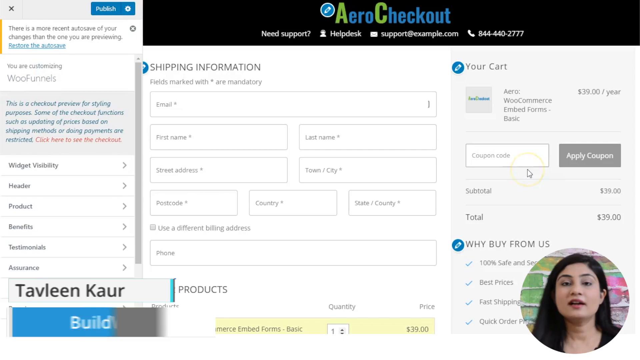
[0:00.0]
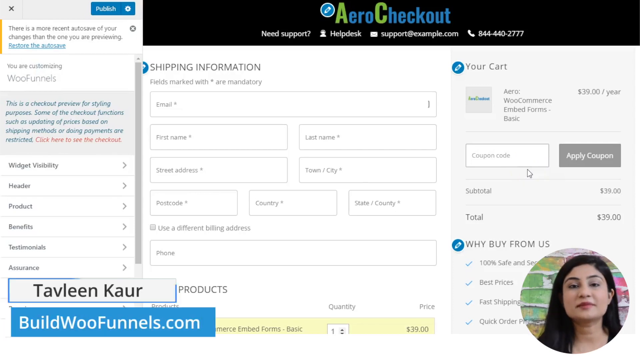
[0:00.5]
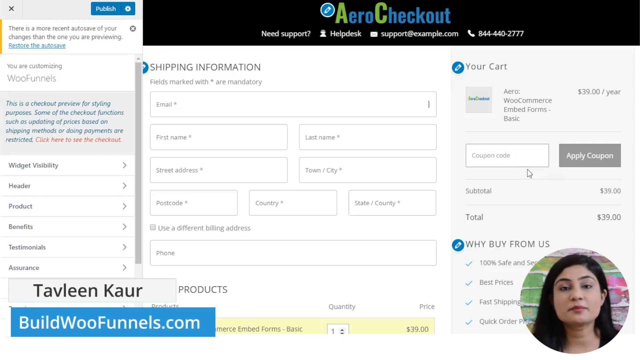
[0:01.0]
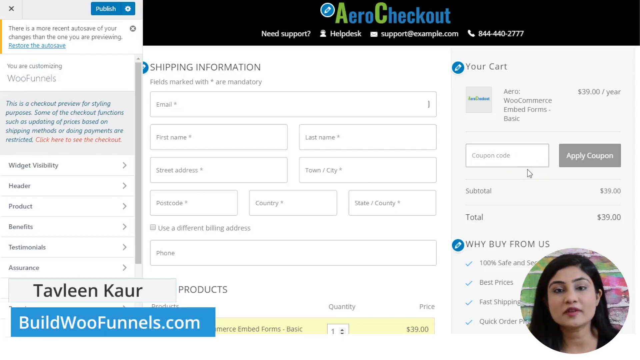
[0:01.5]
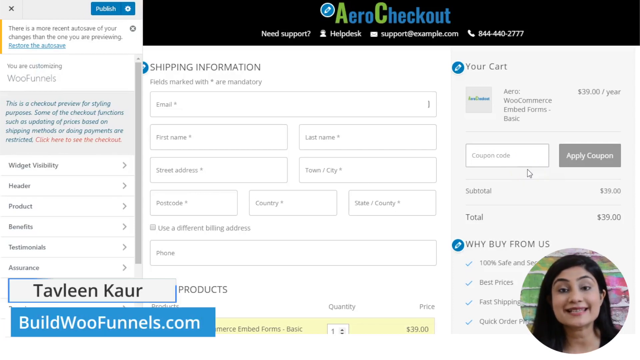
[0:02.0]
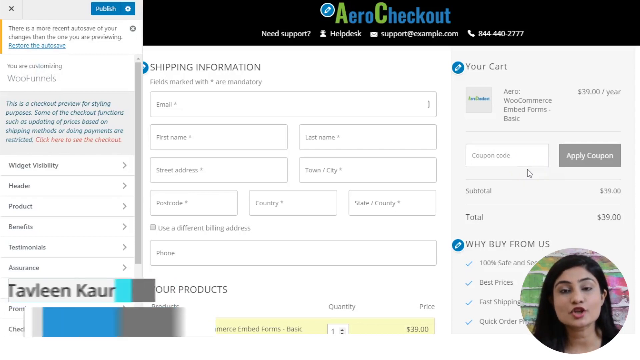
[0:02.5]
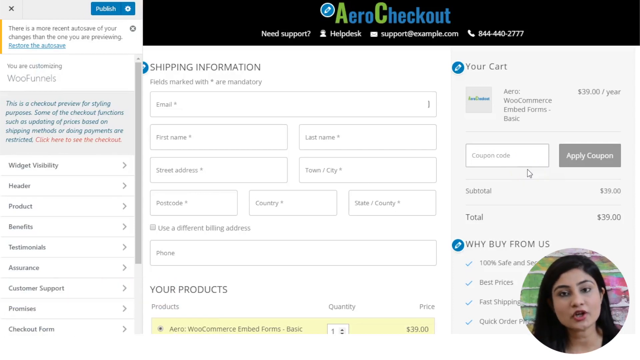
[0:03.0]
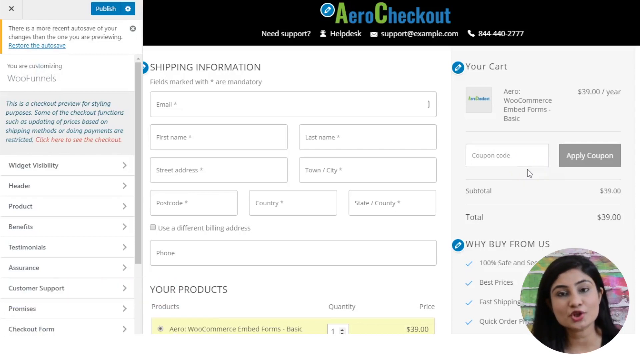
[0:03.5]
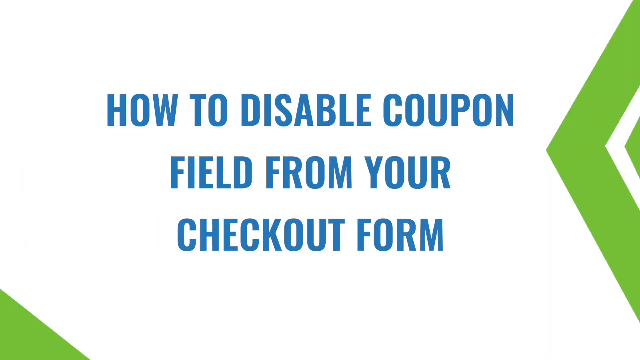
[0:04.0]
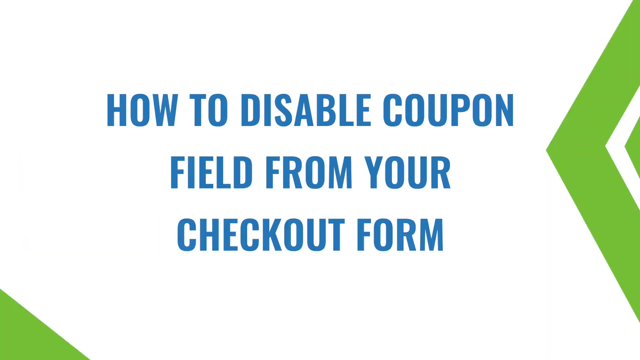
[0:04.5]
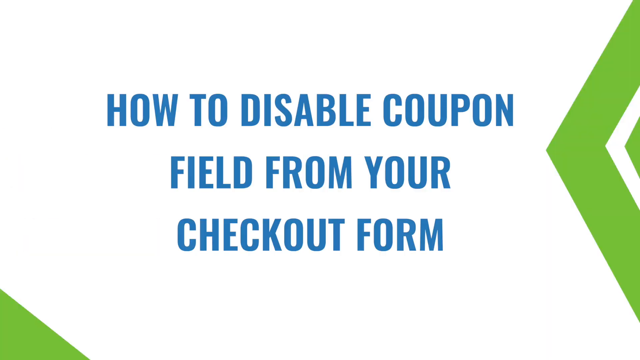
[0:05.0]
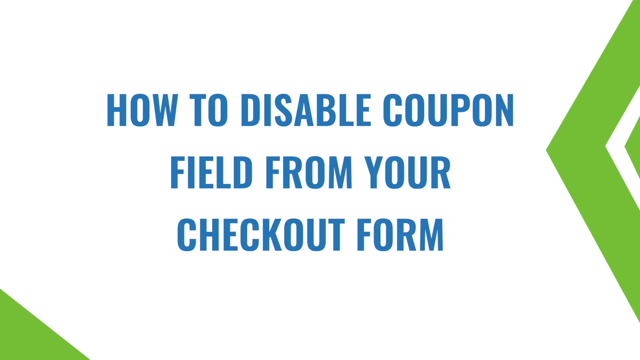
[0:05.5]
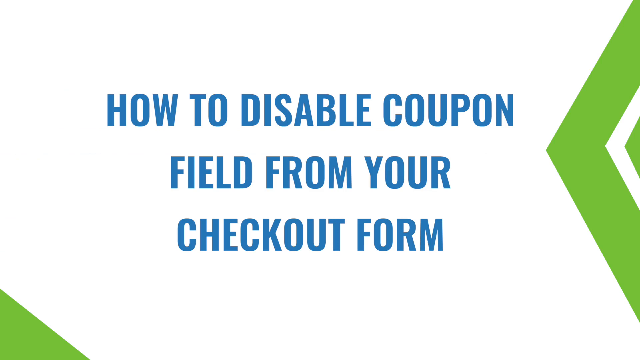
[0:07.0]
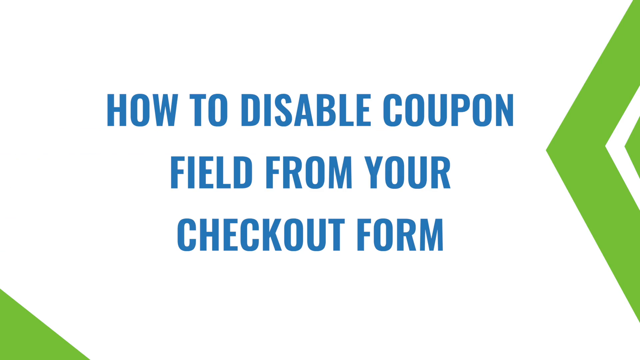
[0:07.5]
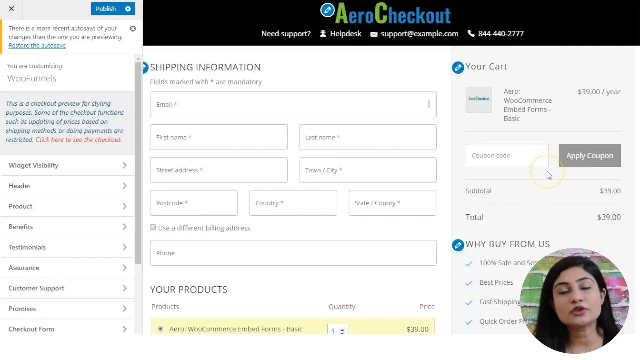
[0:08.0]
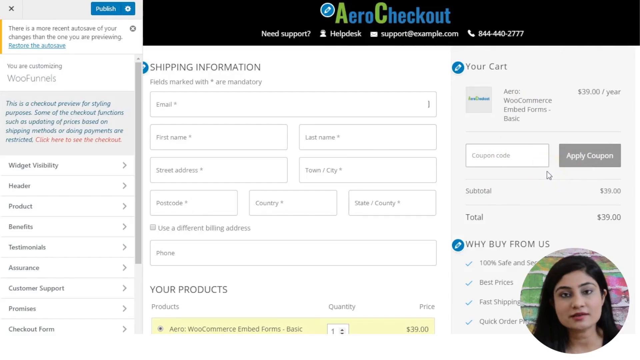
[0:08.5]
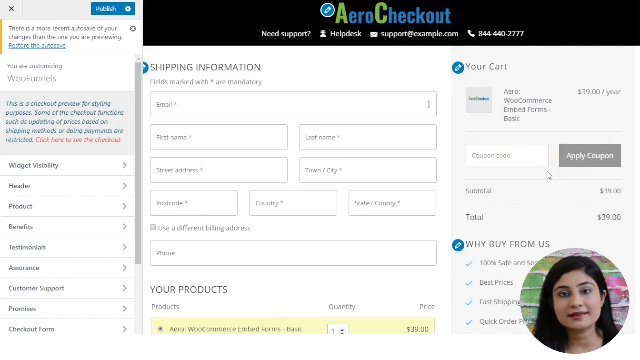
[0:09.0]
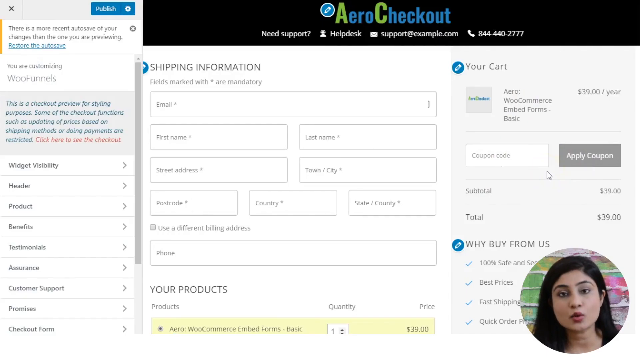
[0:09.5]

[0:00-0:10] A website appears to be pulled up in a recording. At the top is a black label reading "Aero Checkout." Below it several options are listed: need support, help desk, an email address, and a phone number. There is clickable information that looks like shipping information, and other items read "your cart." On the left side there is additional information and options that can be clicked on, along with fields to be filled out, including one labeled "shipping information." In the lower right corner is a circle with the image of a woman speaking directly into the camera. Text then pops up on the screen: "how to disable coupon field from your checkout form."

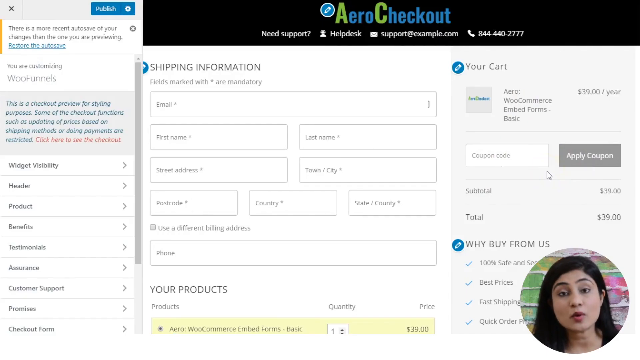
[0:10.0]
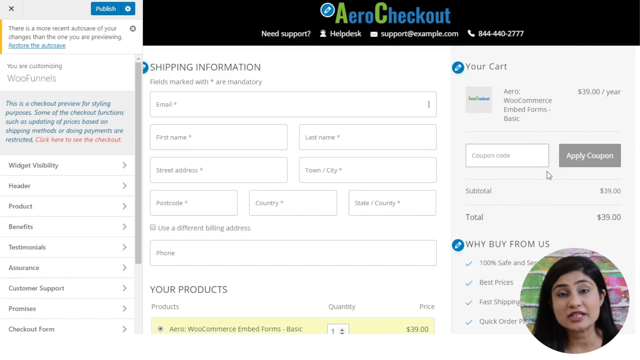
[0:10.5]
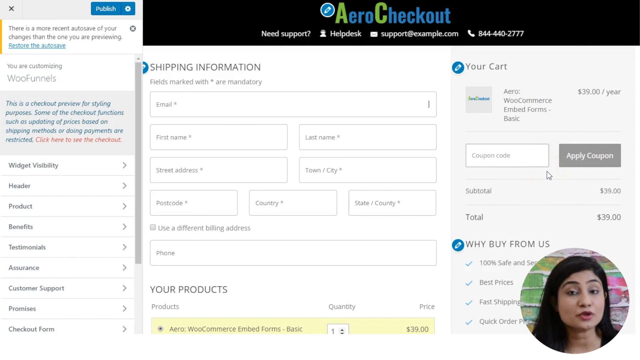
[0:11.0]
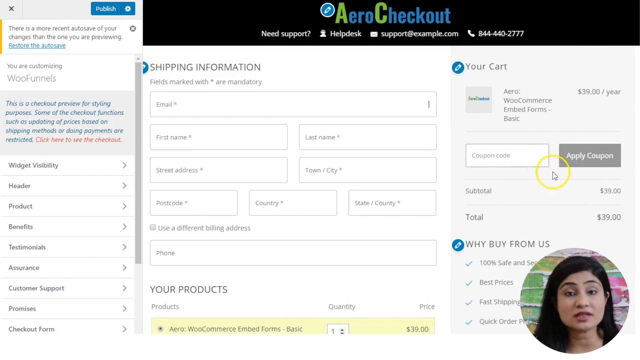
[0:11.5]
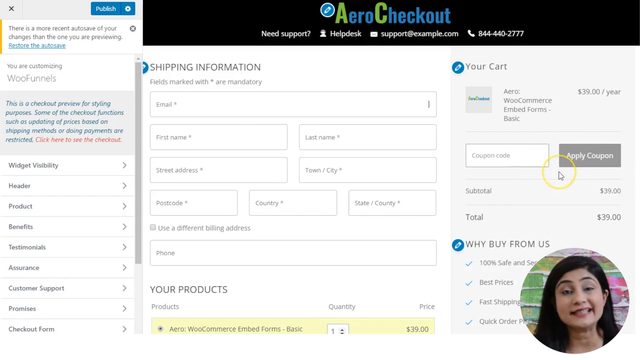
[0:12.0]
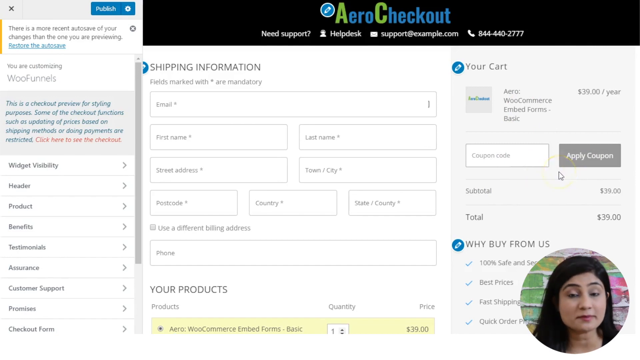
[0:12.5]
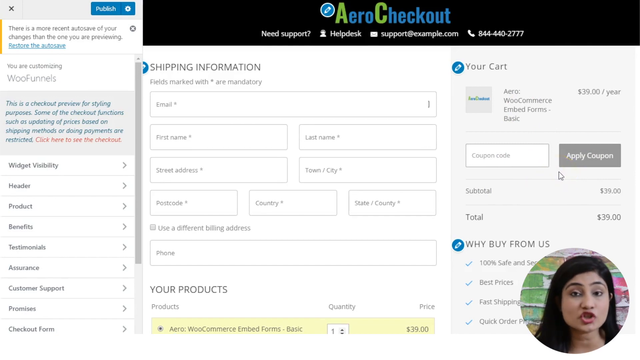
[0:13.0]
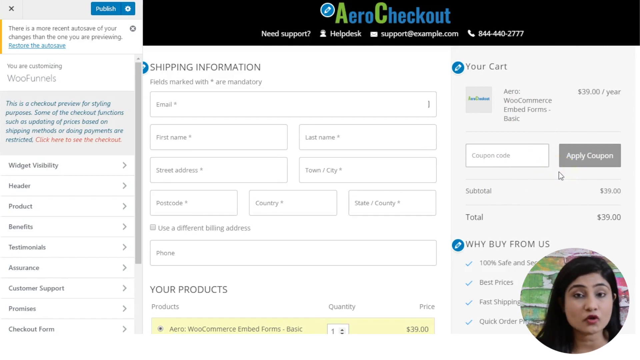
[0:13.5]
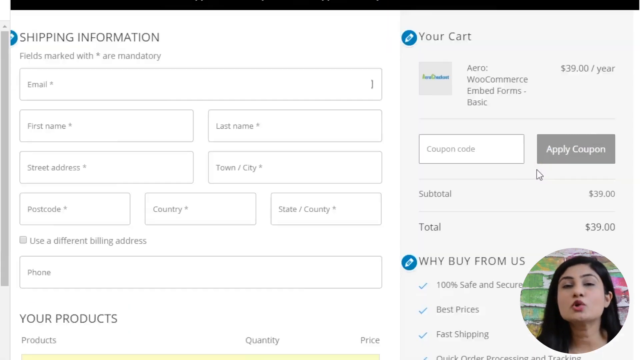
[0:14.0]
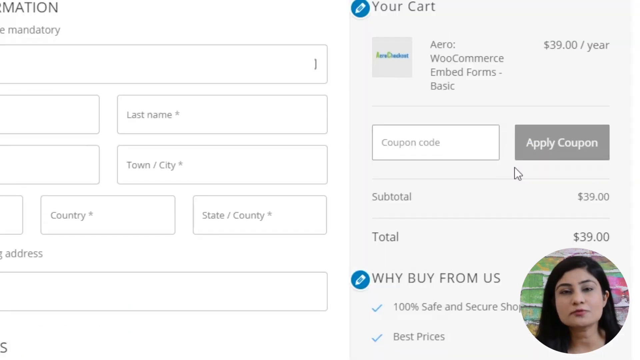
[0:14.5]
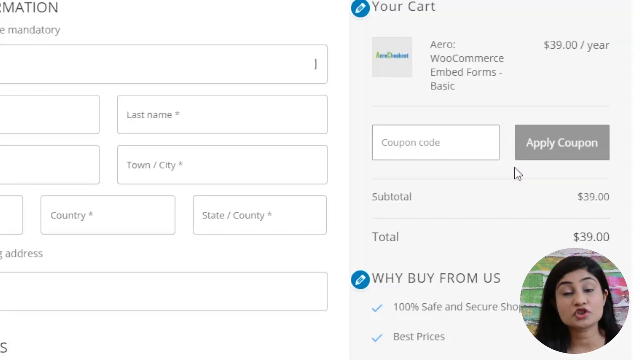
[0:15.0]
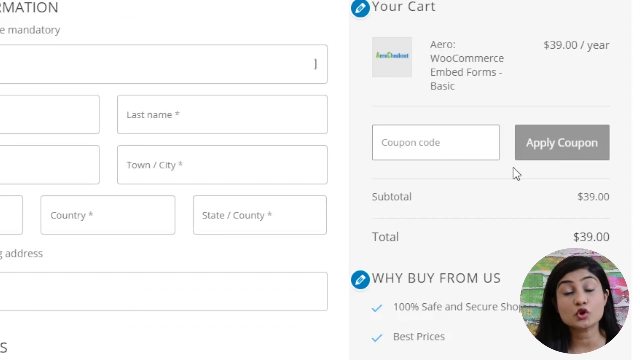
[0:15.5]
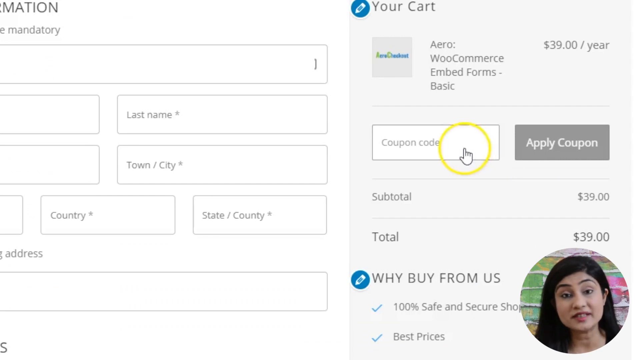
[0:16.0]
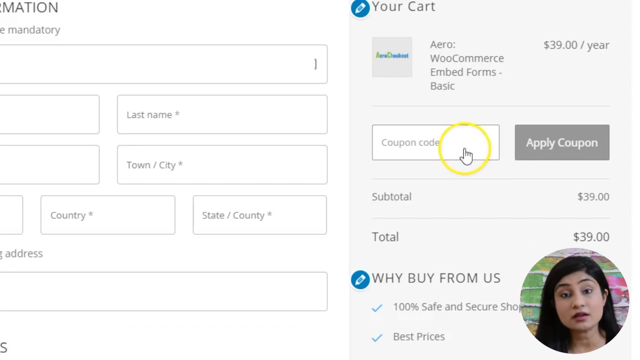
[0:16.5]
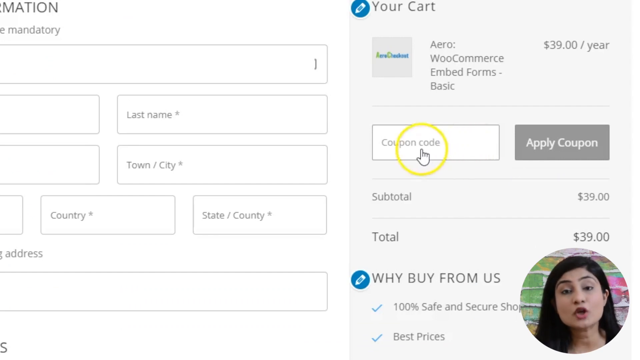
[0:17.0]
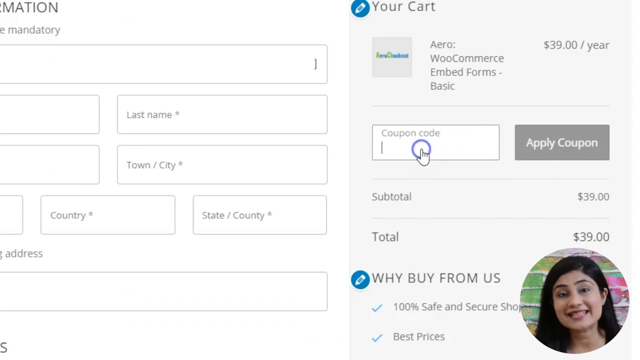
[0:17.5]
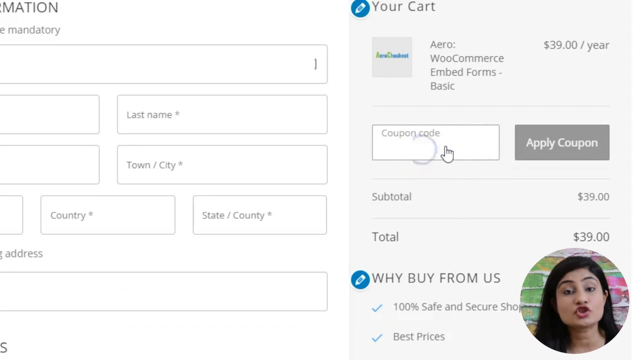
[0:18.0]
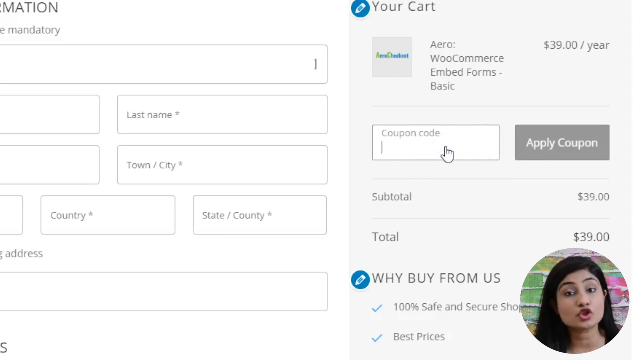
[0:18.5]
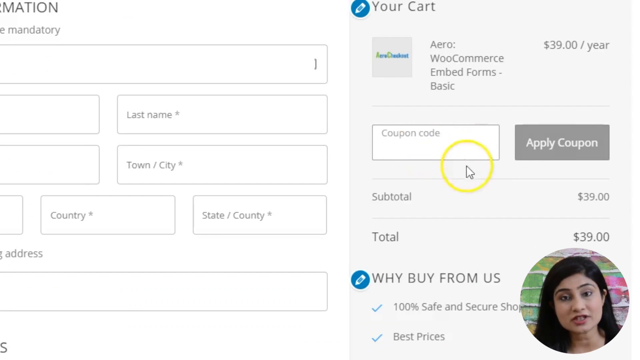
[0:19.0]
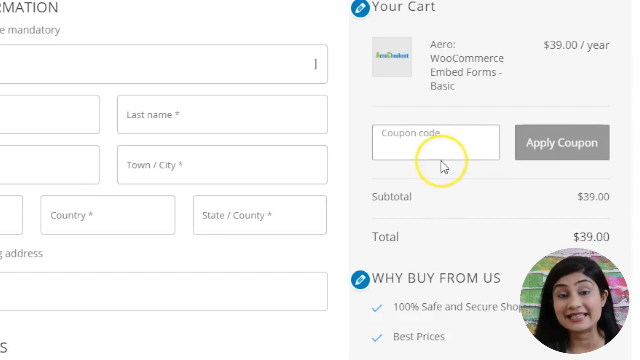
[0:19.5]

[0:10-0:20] A website screen is pulled up with a black label at the top reading "Aero Checkout." Below it are the options need support, help desk, an email address, and a phone number. The screen has items to fill out, including shipping information and your cart. Someone appears to be going over the different options, with a white arrow pointer moving across them. A woman in the lower right corner speaks into the camera as the video shows the different areas of the screen.